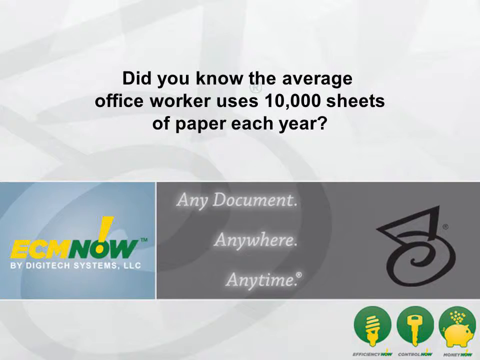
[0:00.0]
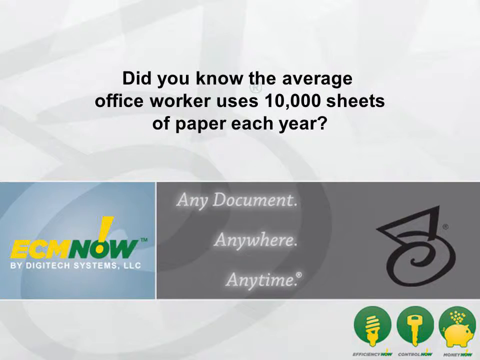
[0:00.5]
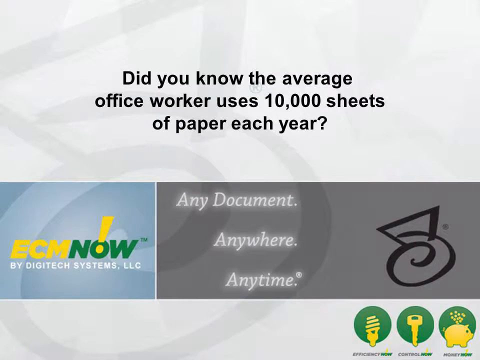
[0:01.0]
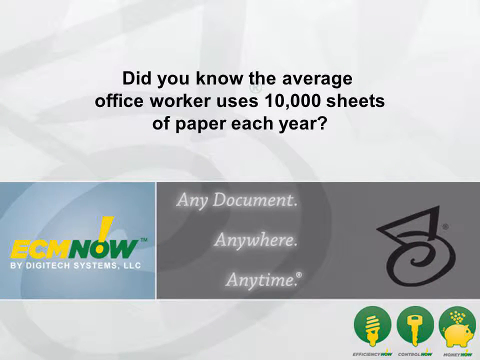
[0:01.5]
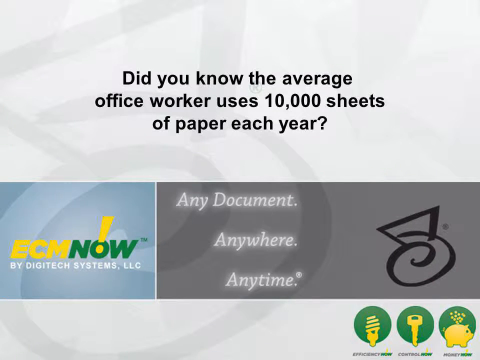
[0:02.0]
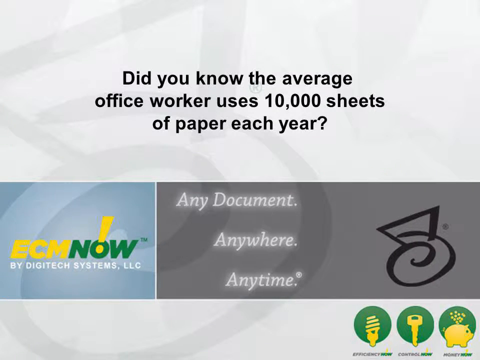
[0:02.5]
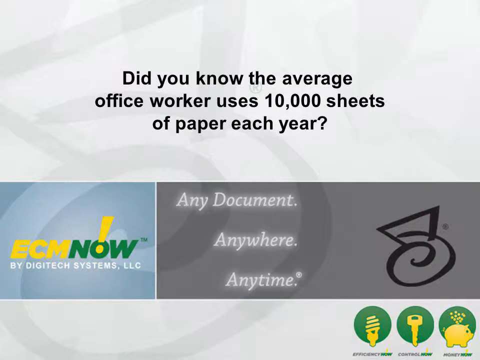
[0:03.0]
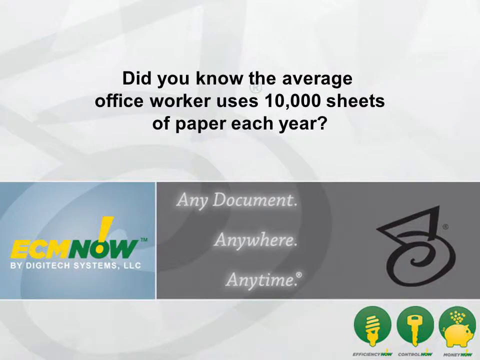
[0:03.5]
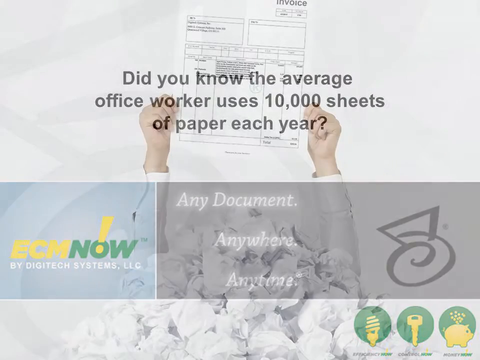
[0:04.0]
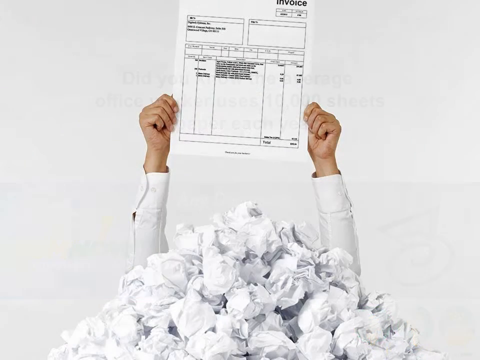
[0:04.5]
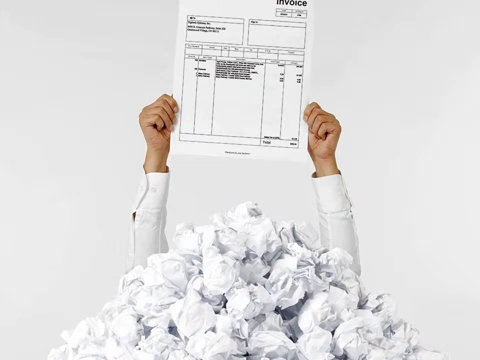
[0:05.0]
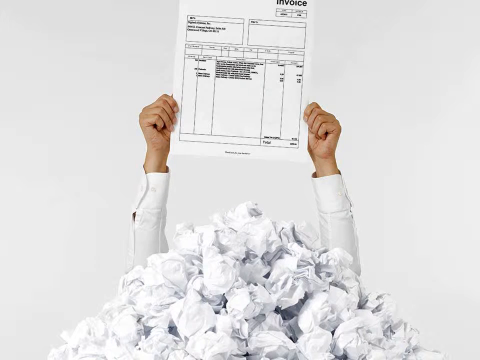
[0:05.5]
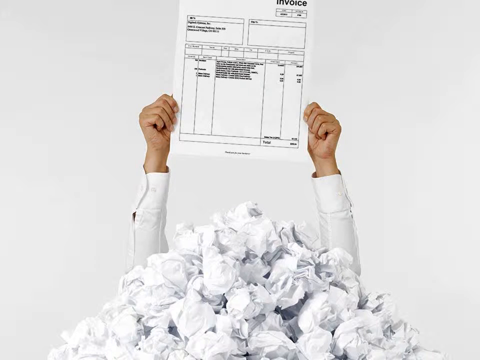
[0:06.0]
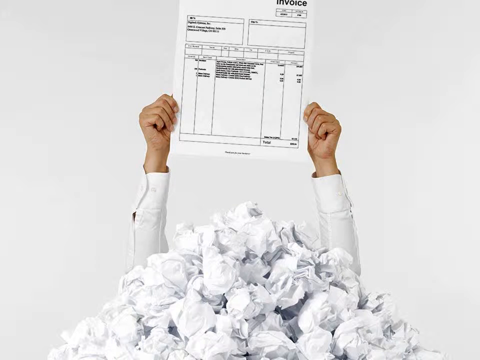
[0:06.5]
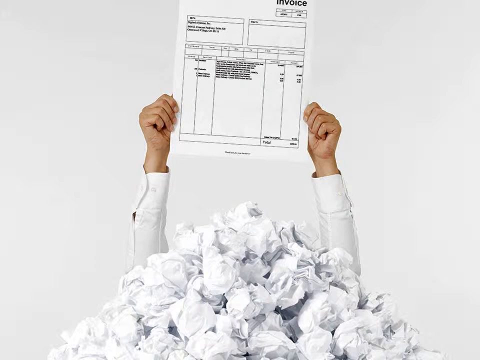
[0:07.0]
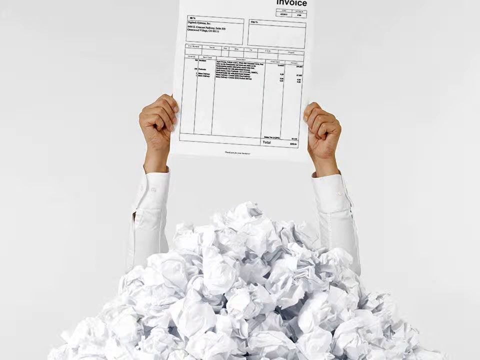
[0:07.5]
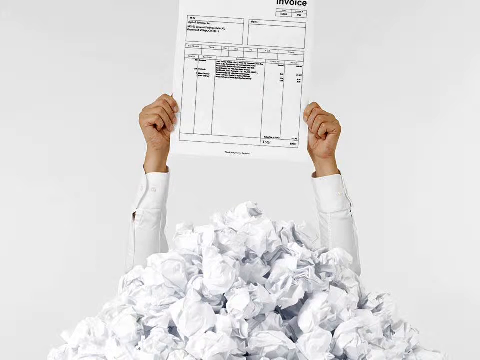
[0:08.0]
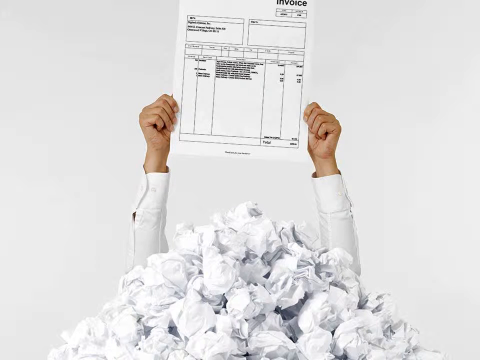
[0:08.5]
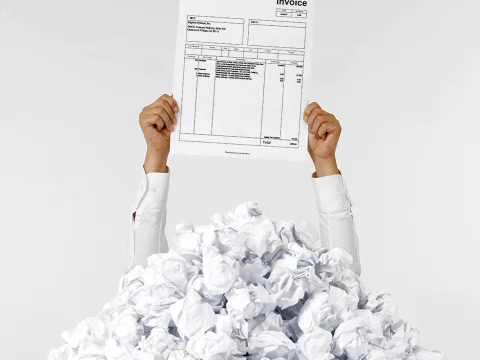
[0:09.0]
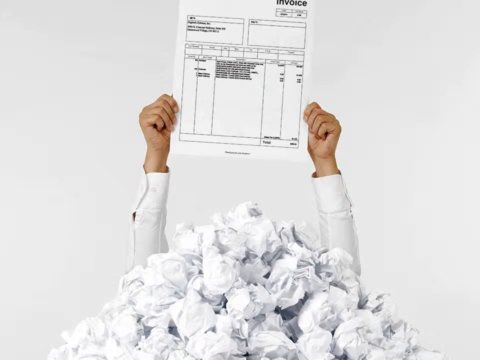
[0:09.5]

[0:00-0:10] The video opens with various symbols and text. At the top of the screen, black text reads "Do you know the average office worker uses 10,000 sheets of paper each year?" In the bottom left corner, yellow and green text reads "ECM now", with a yellow exclamation mark sort of inside the O of "now". Below that, white text reads "by Digitech Systems LLC", and to the right of it, white text reads "Any document, anywhere, anytime." Next, a pile of paper appears at the bottom of the screen, forming kind of a triangle shape. Two arms emerge from the paper, wearing white sleeves, probably from a white dress shirt. The hands hold a piece of paper above the pile, with "Invoice" in black at its top right corner.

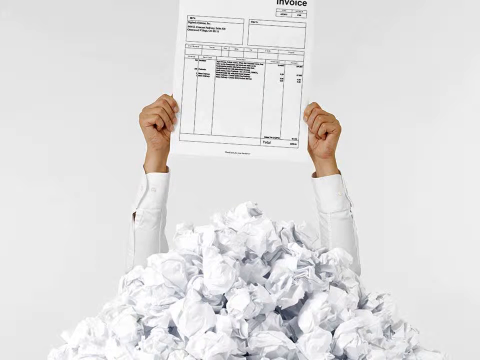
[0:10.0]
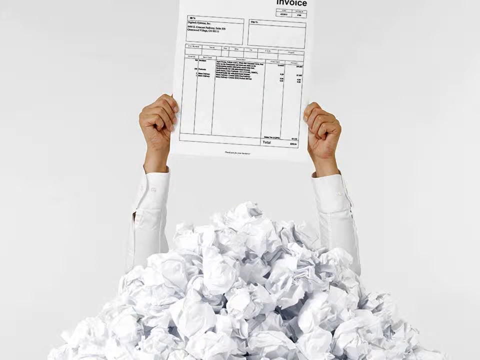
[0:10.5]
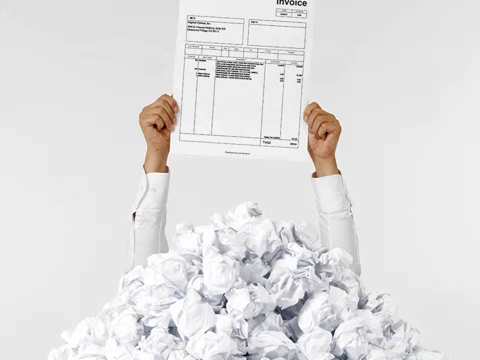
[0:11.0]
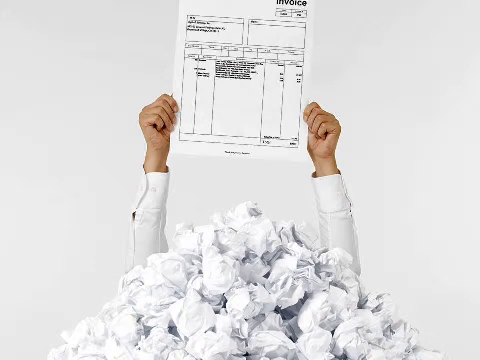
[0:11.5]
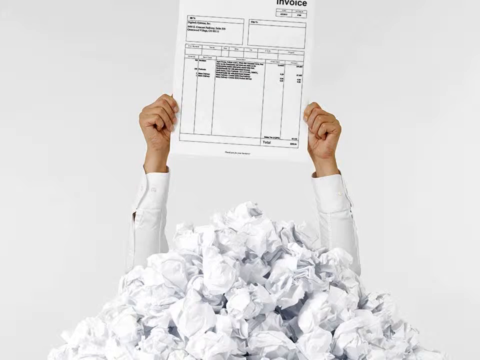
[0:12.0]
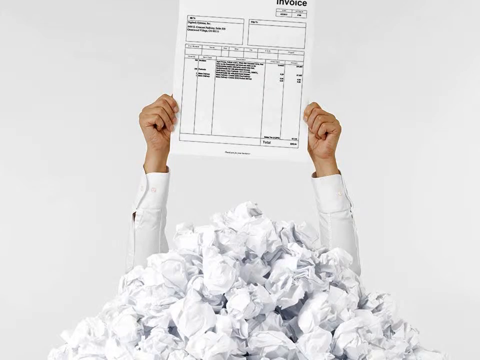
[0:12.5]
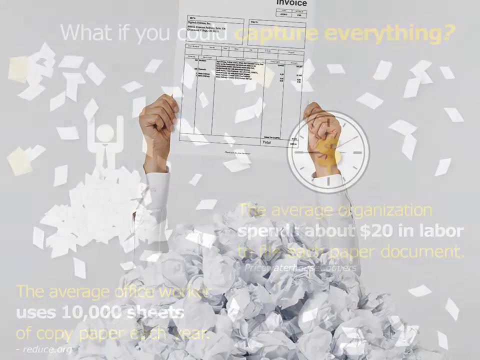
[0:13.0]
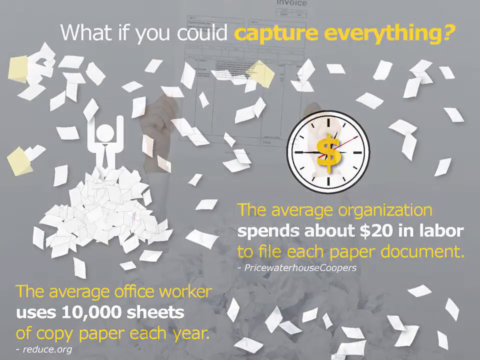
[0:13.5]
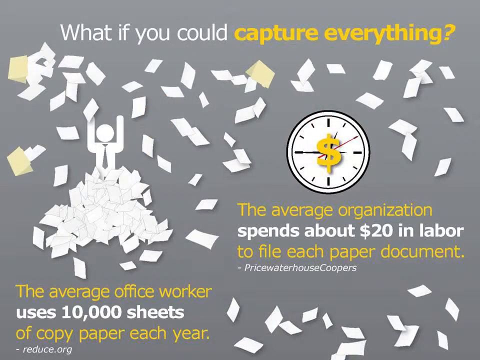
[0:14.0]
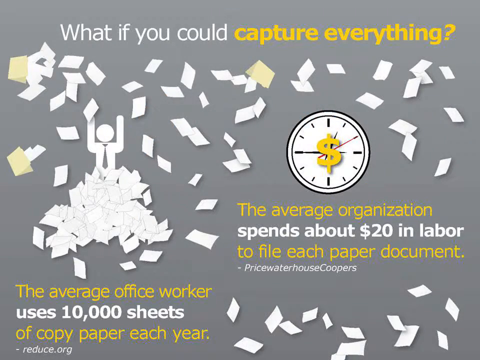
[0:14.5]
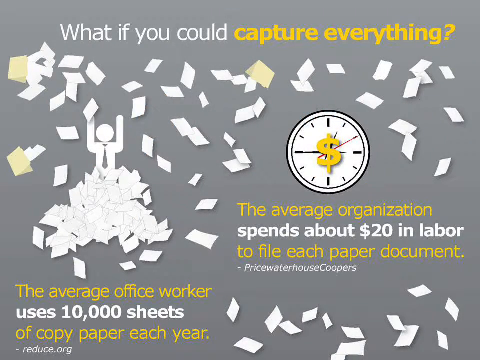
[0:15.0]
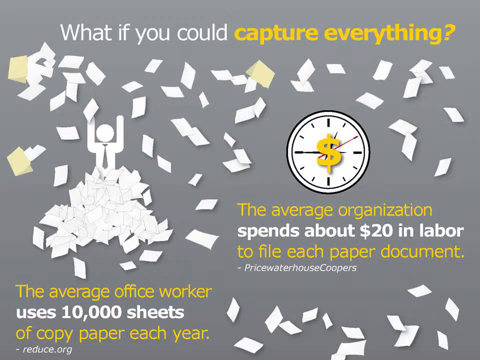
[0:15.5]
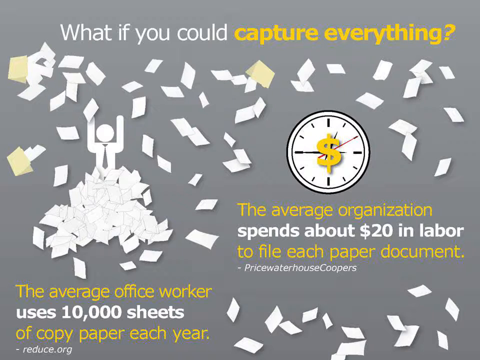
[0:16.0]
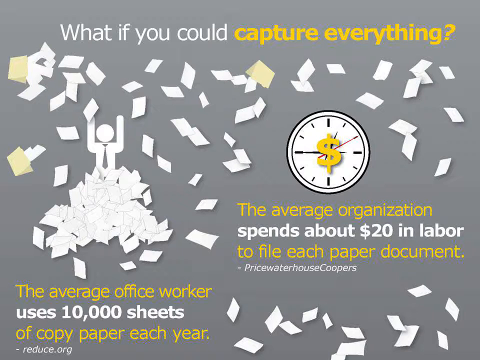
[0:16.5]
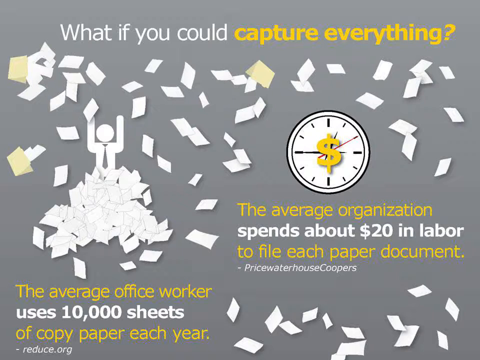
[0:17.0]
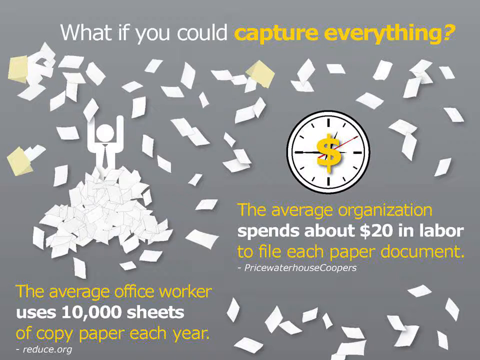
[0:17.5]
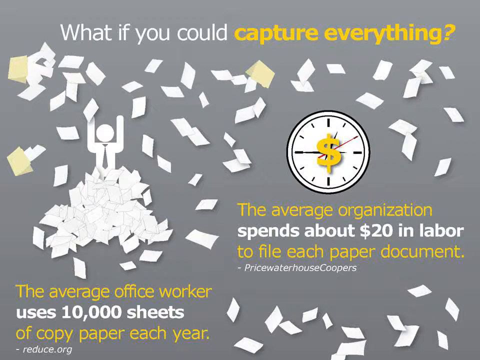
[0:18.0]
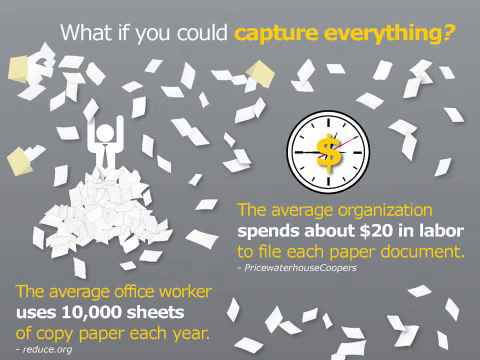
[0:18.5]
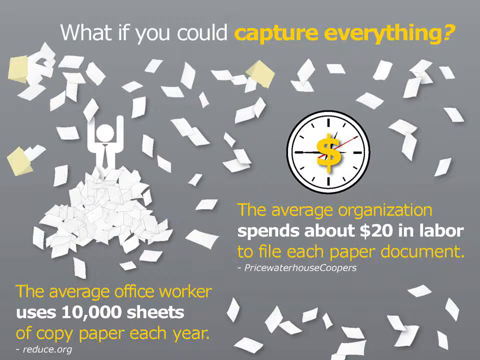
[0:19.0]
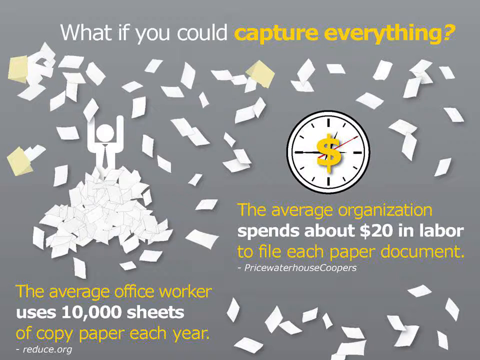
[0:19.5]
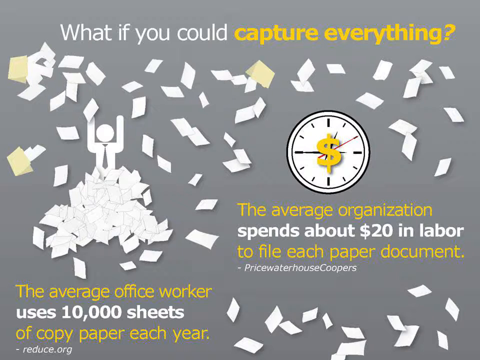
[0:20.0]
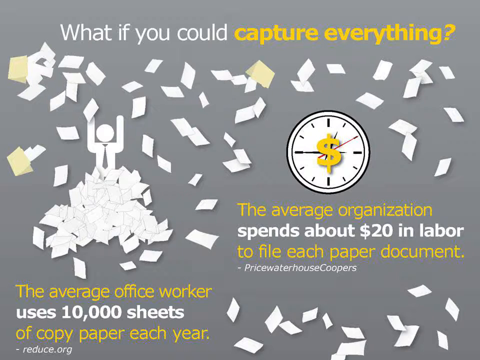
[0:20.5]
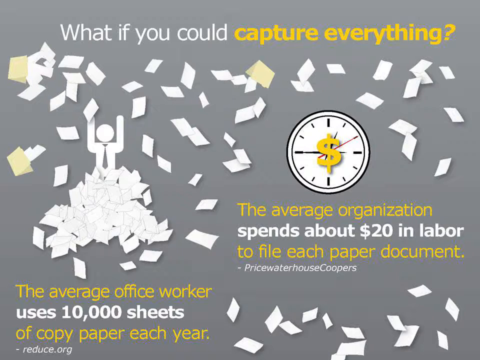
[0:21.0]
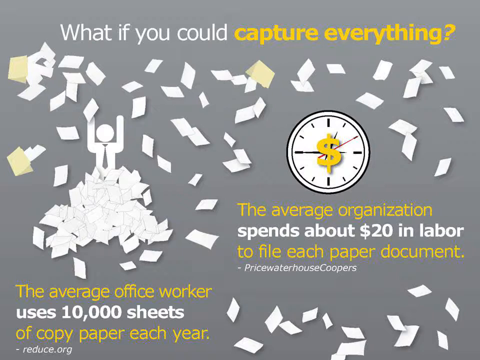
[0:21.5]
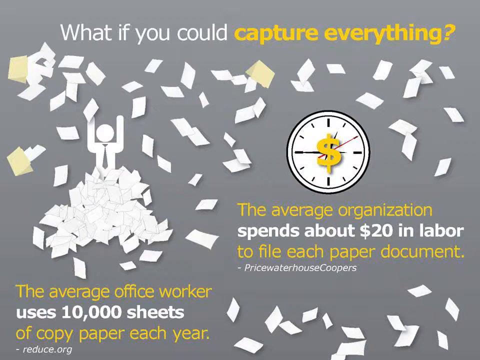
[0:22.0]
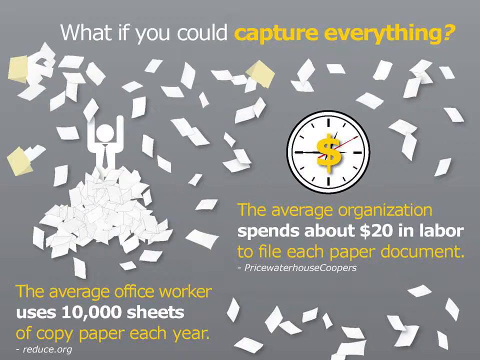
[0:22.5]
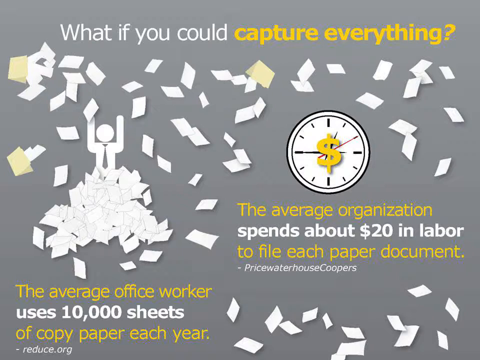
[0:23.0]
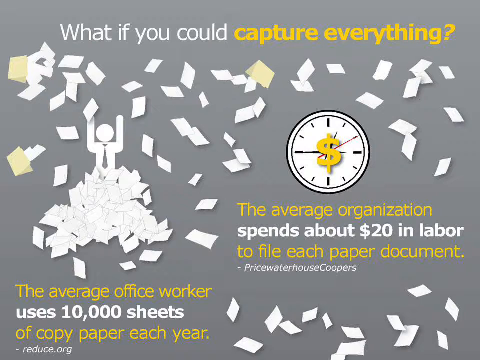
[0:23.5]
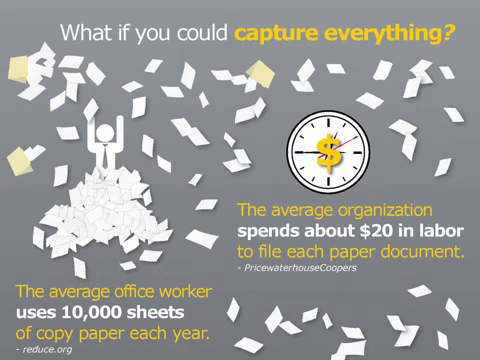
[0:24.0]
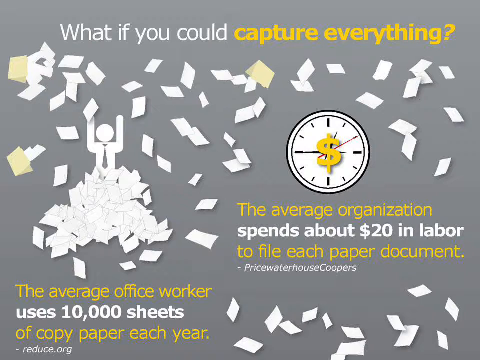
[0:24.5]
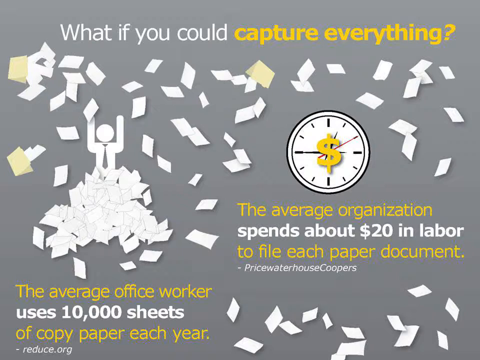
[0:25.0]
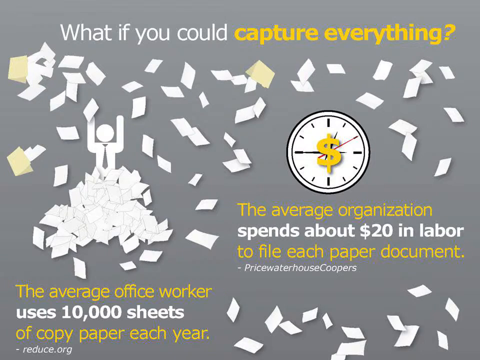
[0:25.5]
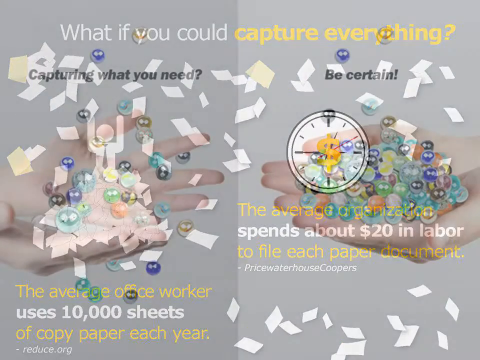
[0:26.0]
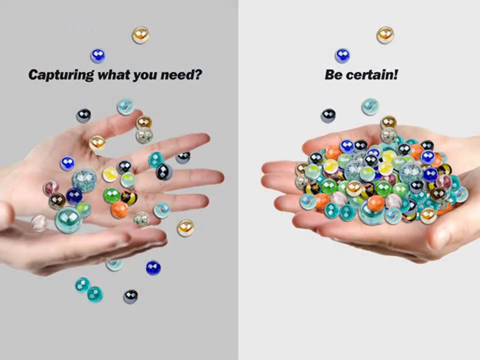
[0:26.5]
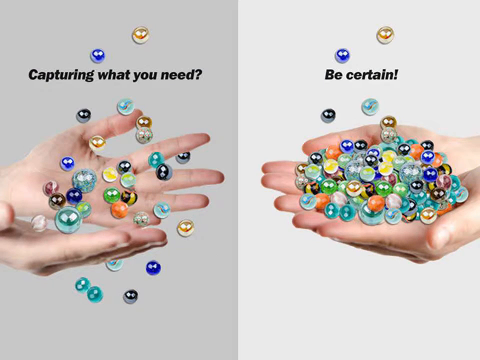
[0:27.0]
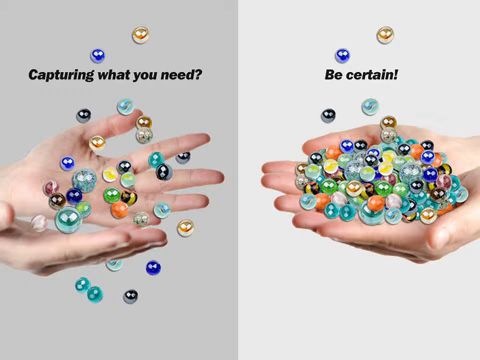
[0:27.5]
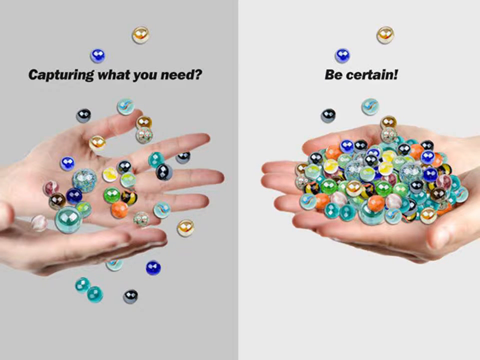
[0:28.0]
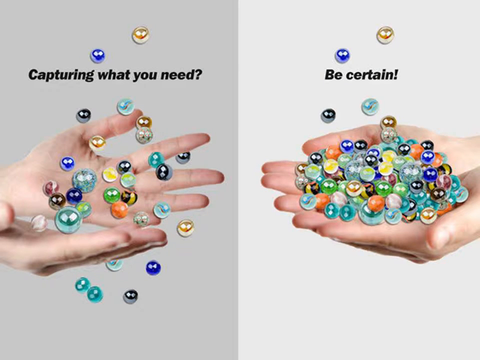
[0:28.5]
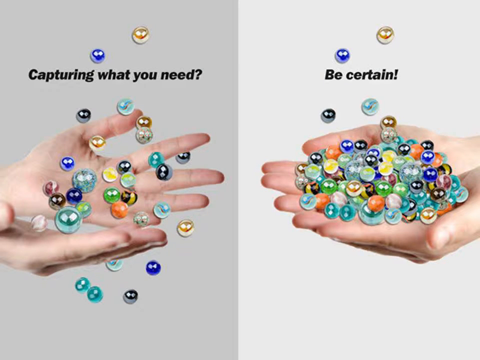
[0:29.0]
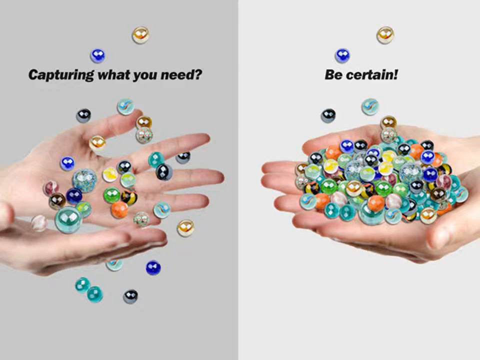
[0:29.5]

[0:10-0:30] A pile of papers, which look all crumpled up into balls, is piled into a pyramid-like shape. Two hands emerge from the pile, with only the forearms and hands visible. The hands hold up a piece of paper above the pile that says "invoice" in black text in its top right corner. The scene then changes to a gray background with many small illustrated pieces of paper flying around everywhere, and a pile of paper on the left side of the screen topped by an illustrated, cartoonish person shape wearing a tie. At the top, white and yellow text reads "what if you could capture everything?" In the bottom right, black, yellow and white text reads "the average organization spends about $20 in labor to file each paper document", with "PricewaterhouseCoopers" in white text below it. In the bottom left corner, white and yellow text reads "the average office worker uses 10,000 sheets of copy paper each year", with "reduce.org" in white text below it.